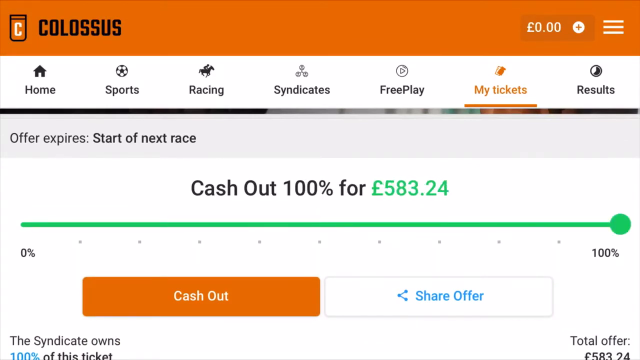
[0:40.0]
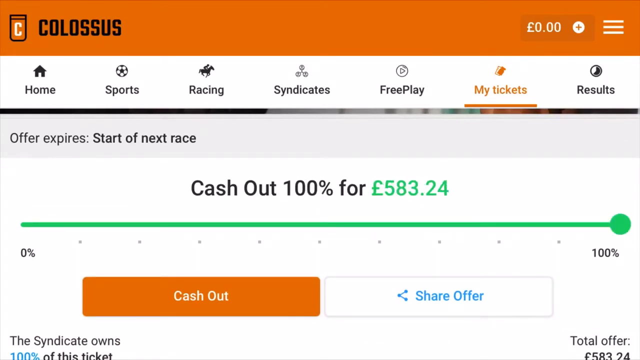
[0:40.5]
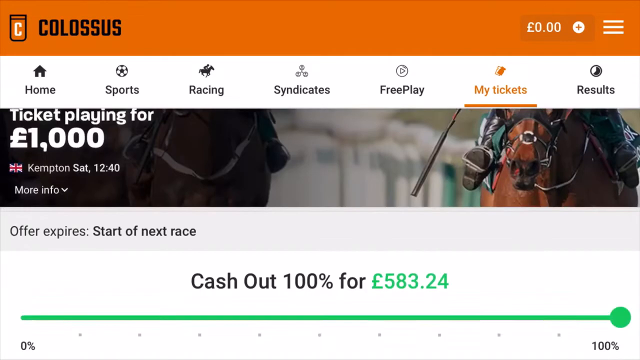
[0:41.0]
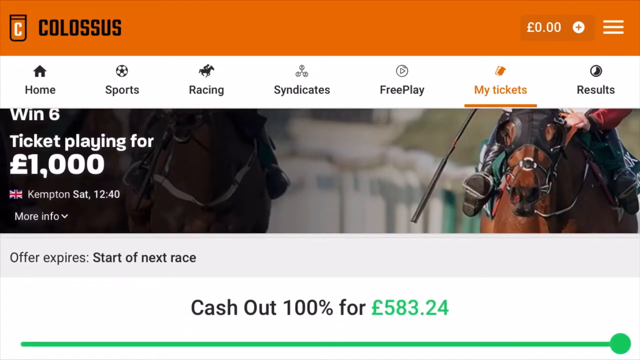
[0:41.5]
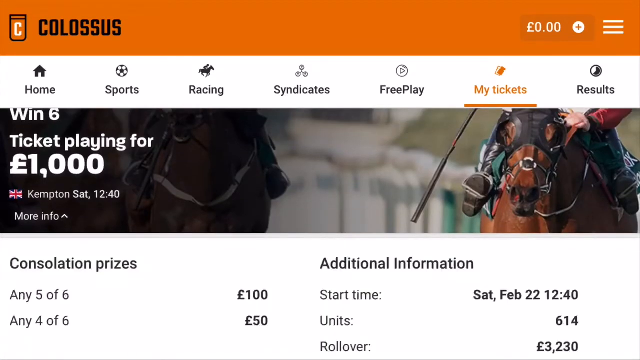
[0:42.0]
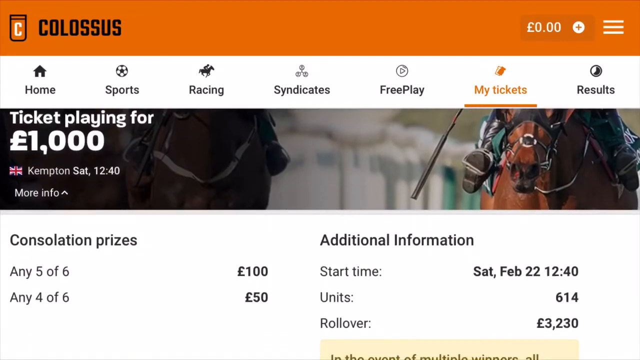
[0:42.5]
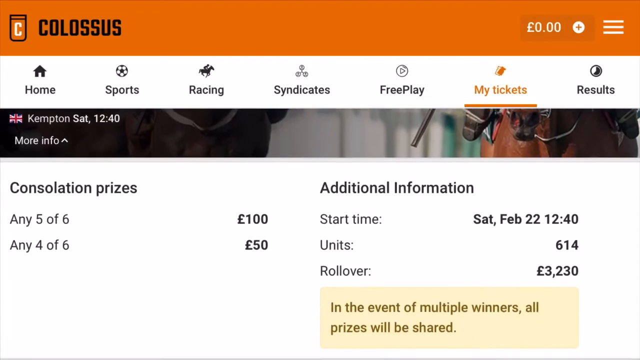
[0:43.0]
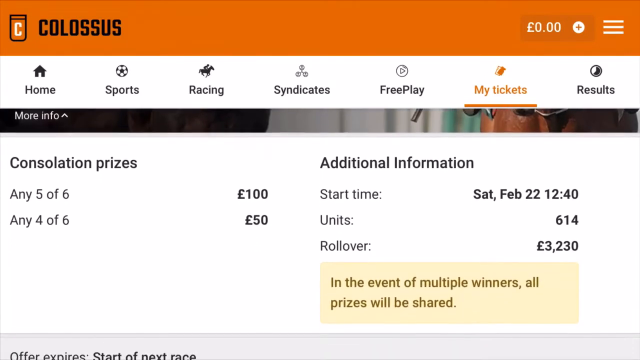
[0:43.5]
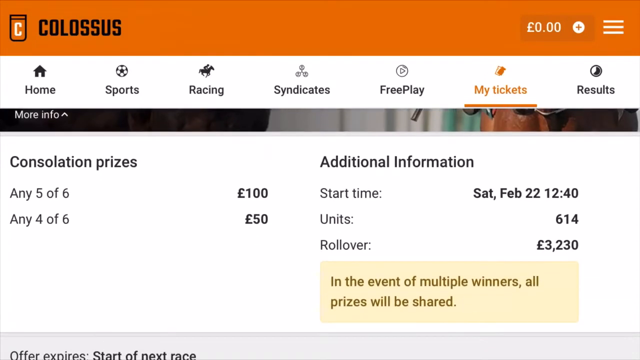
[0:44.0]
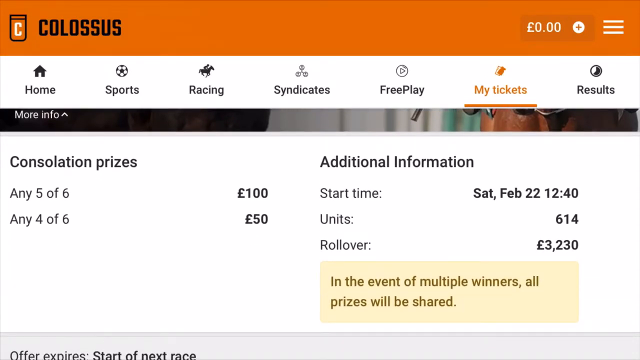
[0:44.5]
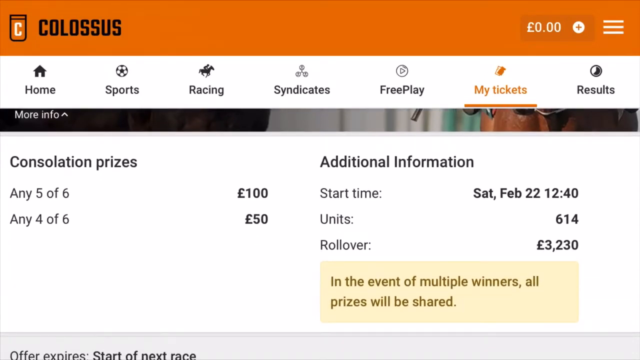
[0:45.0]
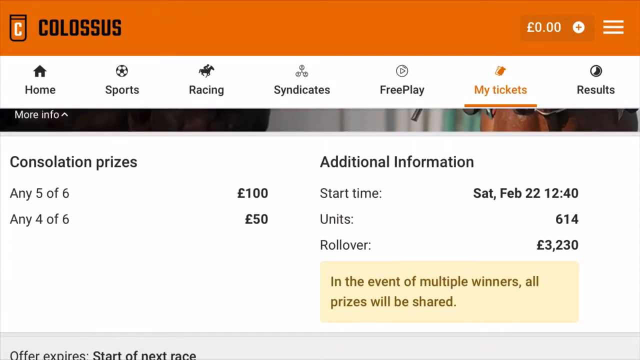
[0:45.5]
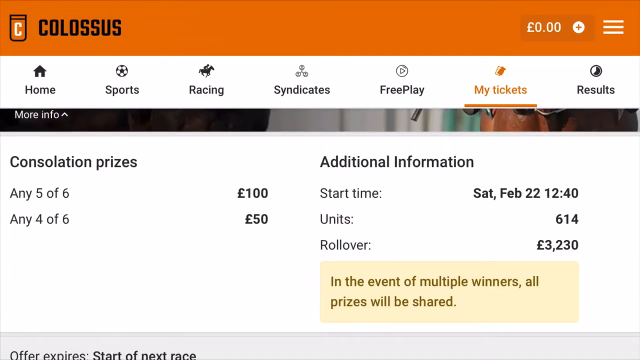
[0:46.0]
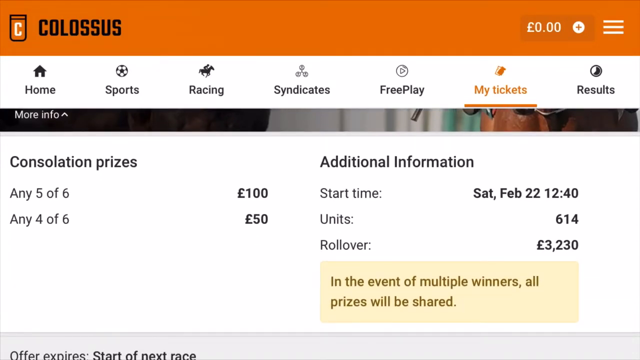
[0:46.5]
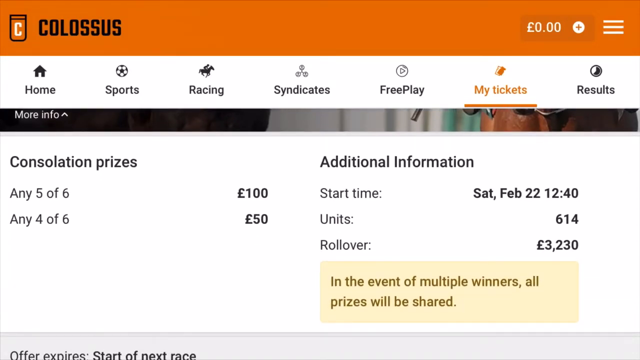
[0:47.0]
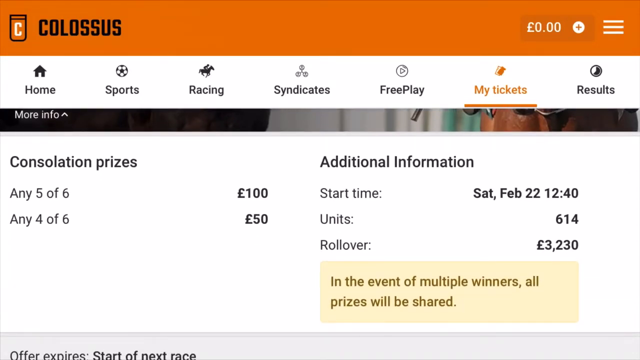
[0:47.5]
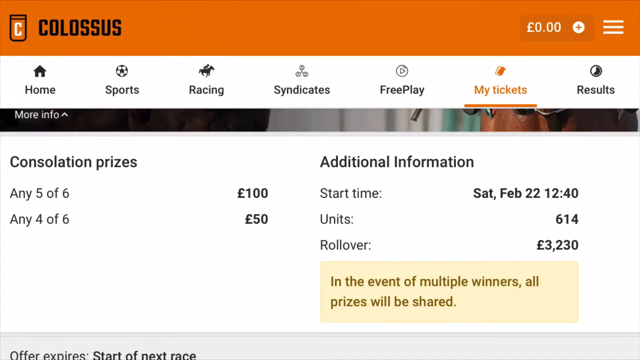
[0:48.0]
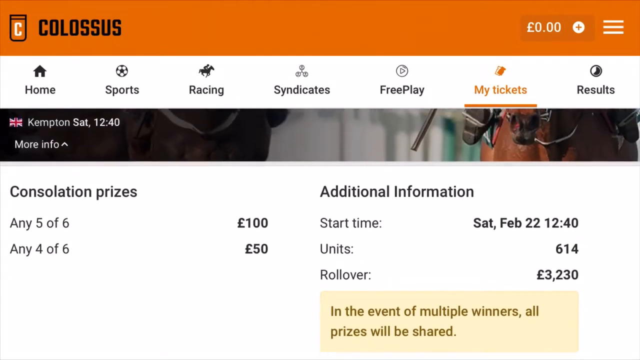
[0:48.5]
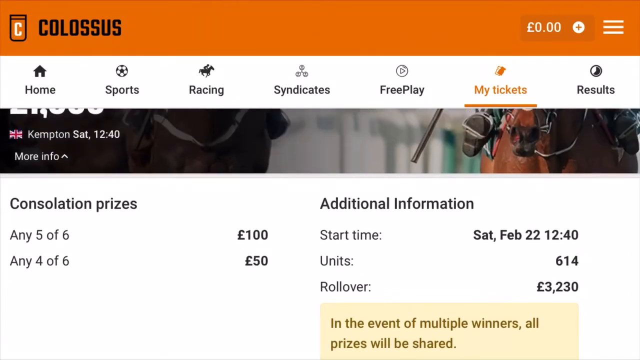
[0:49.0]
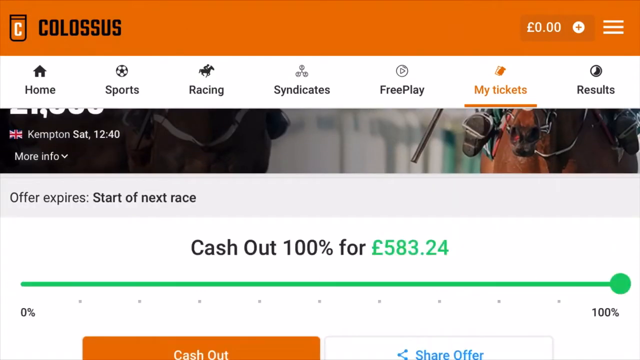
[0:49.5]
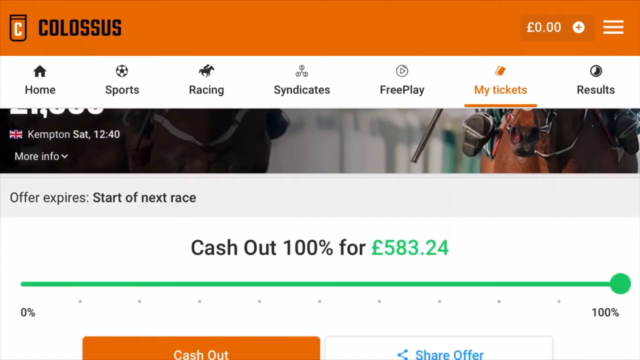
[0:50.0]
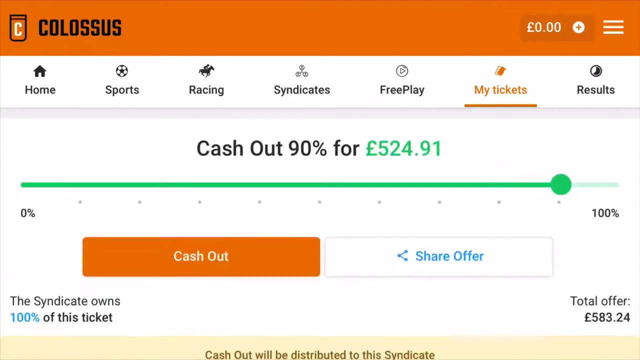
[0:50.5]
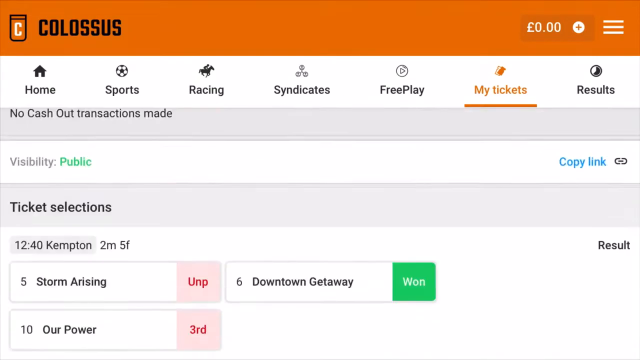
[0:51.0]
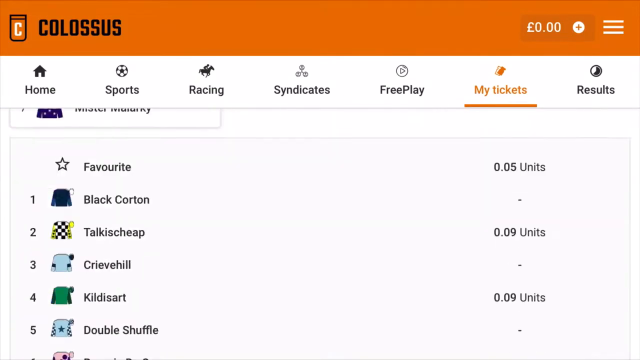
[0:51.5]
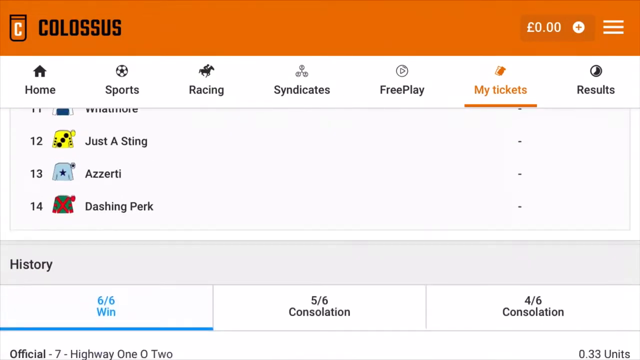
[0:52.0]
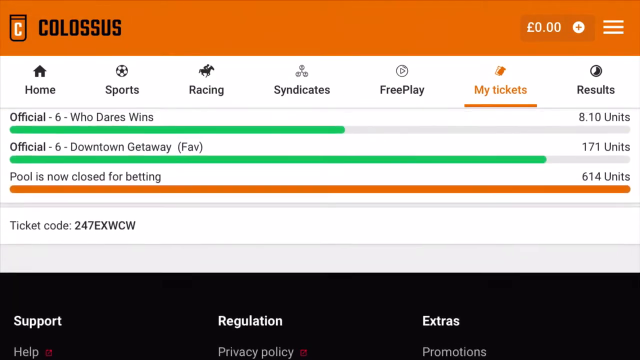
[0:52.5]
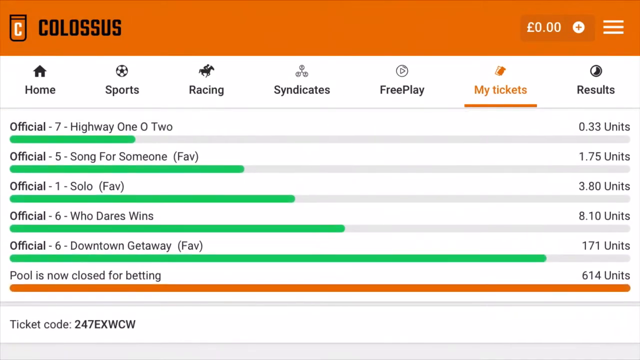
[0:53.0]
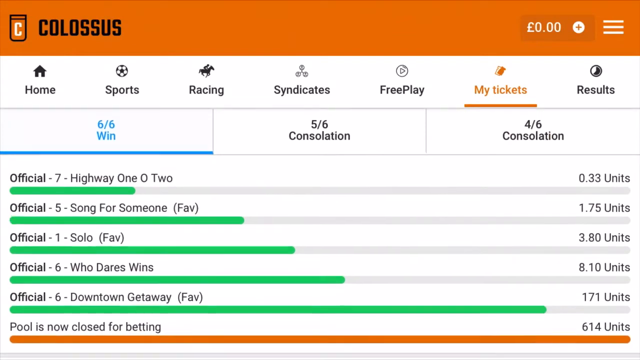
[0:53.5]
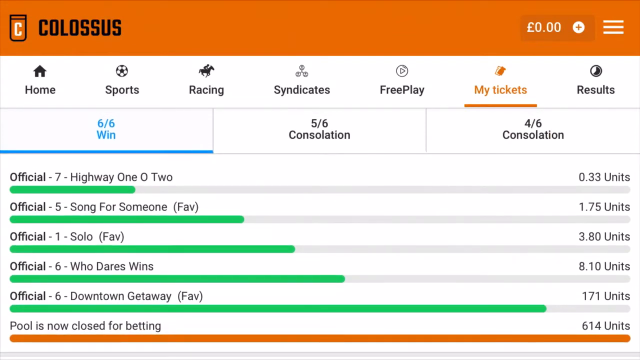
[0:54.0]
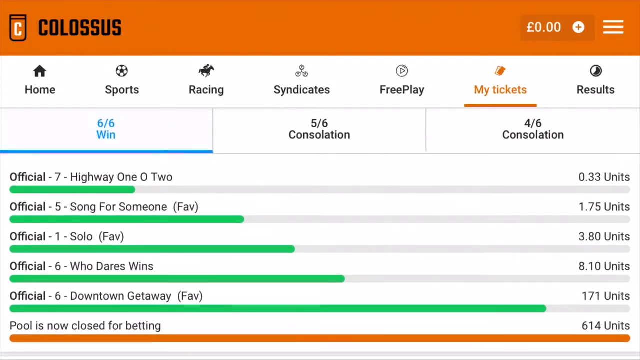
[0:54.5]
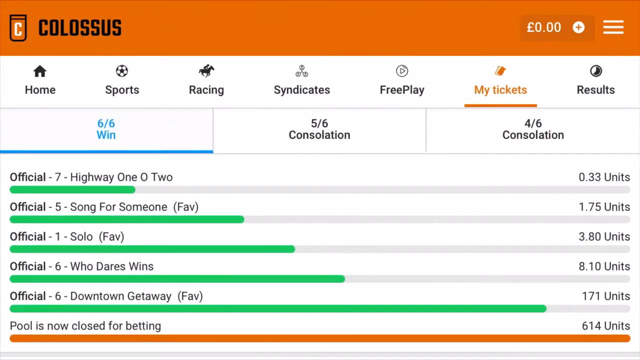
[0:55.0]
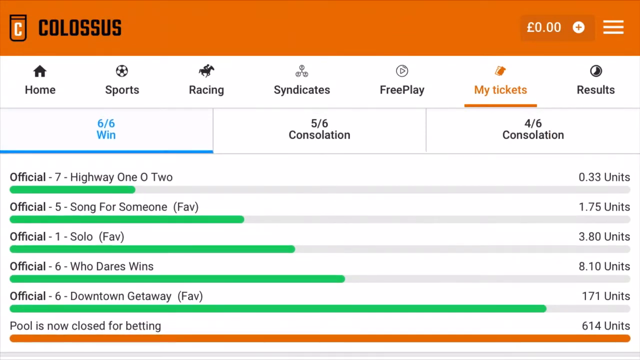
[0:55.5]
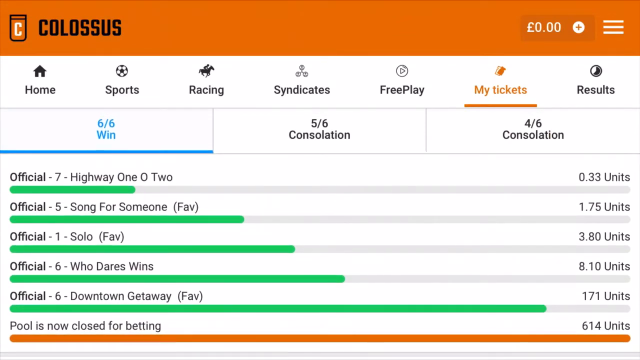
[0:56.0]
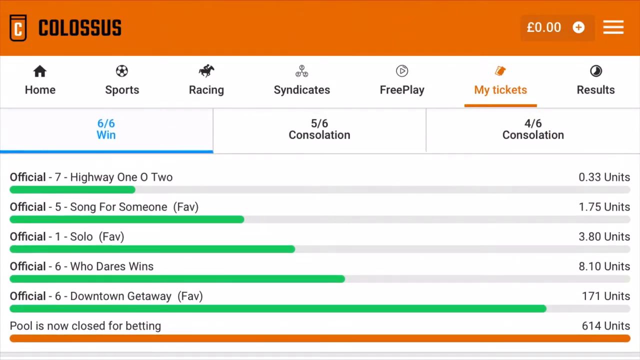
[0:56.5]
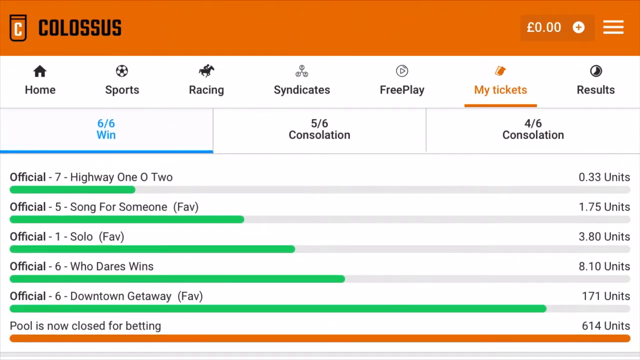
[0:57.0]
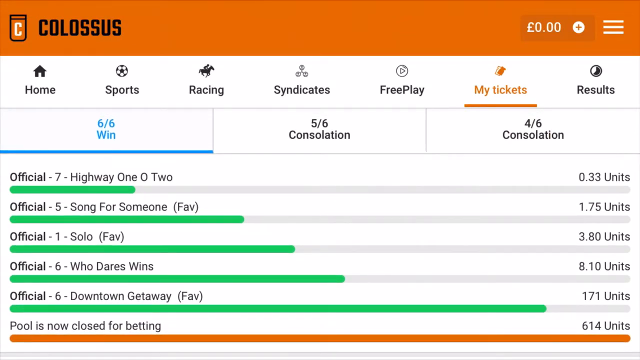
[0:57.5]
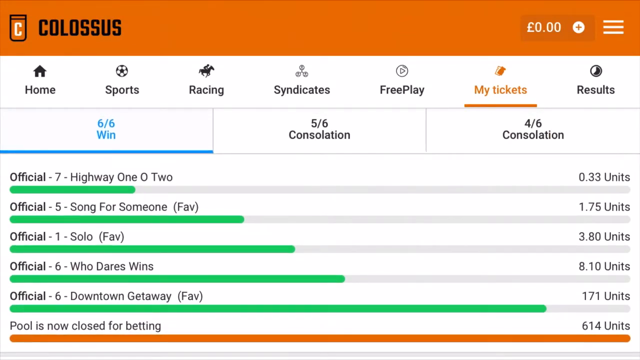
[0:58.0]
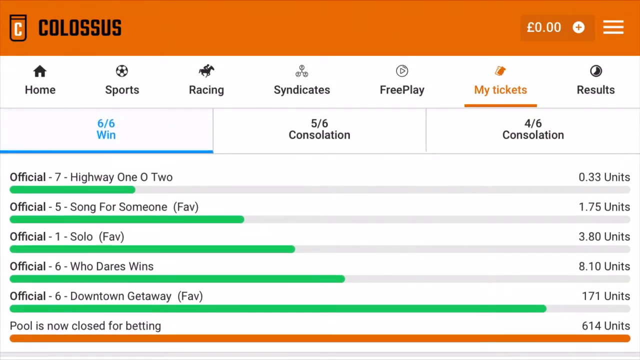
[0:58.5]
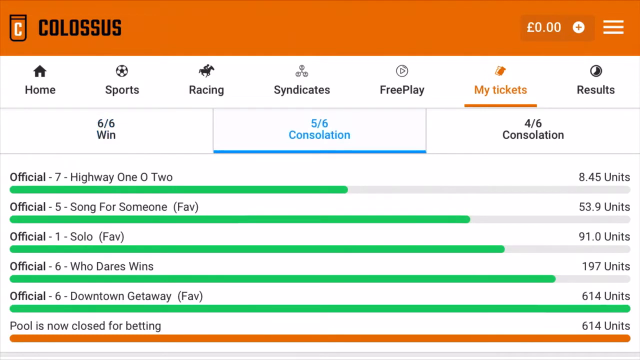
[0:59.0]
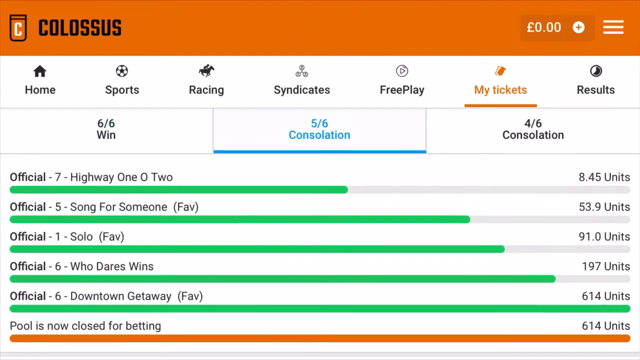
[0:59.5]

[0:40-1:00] A Colossus page has an orange bar at the top and says "win six", showing what a ticket would pay out. There is a list of consolation prizes, and the screen spins very fast before stopping on "my tickets". Underneath the orange bar is a header that says "Colossus", with the options "home", "sports", "racing", "syndicates", "free play", "my tickets" and "results". Someone scrolls to my tickets, showing "cash out 100 percent for 583.24", not in US dollars. A green bar goes from left to right with an orange circle at the far right, labeled "100 percent". At the very bottom are a cash out button in orange and a share button in white with blue. The bar moves inward a little, and then a 6-6 win is shown, along with a consolation and another consolation on the right-hand side.